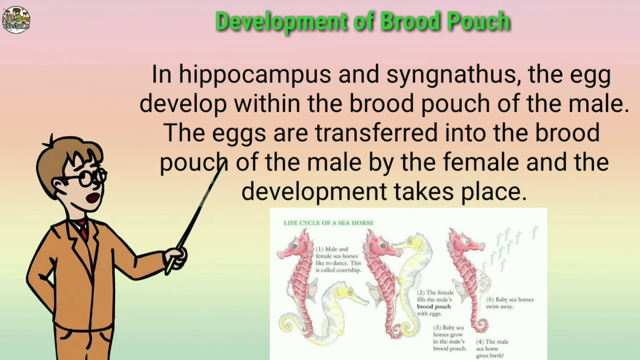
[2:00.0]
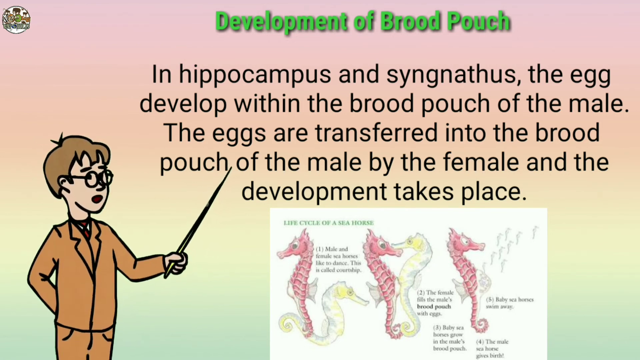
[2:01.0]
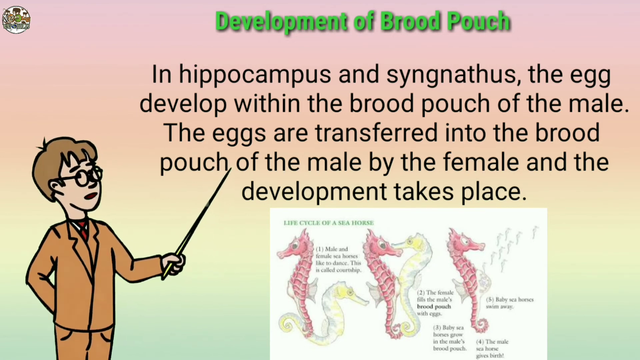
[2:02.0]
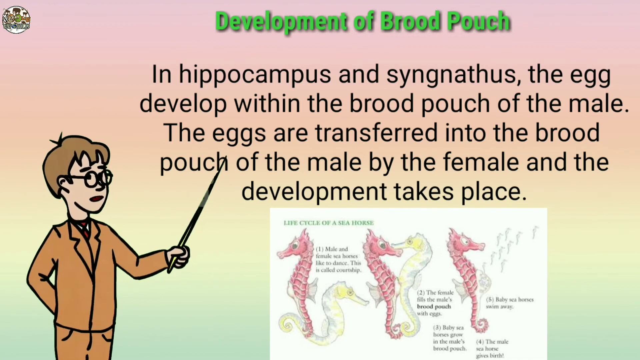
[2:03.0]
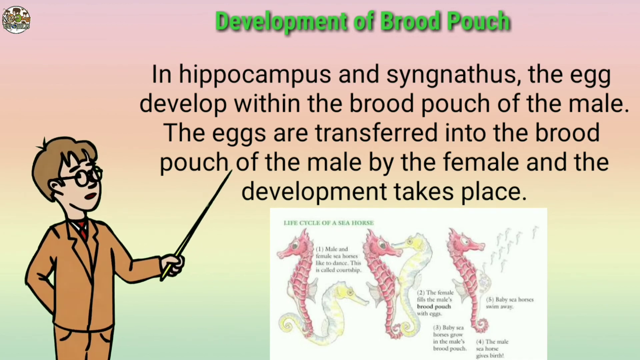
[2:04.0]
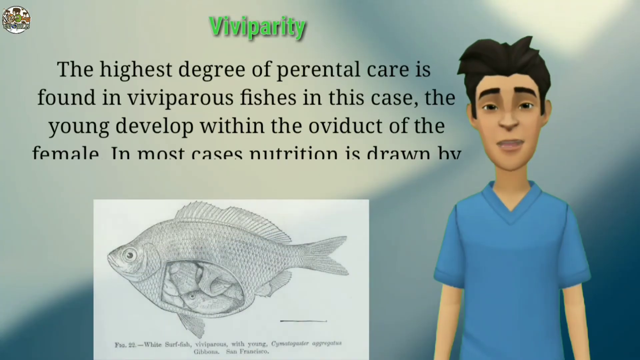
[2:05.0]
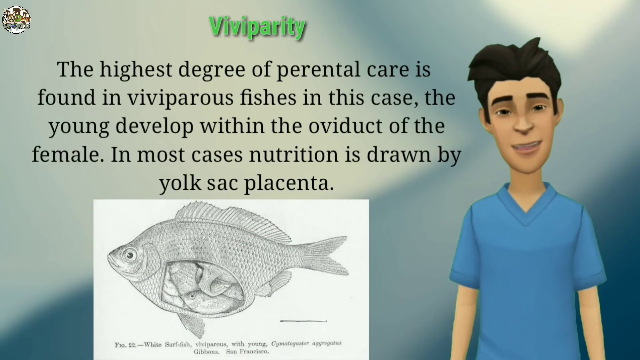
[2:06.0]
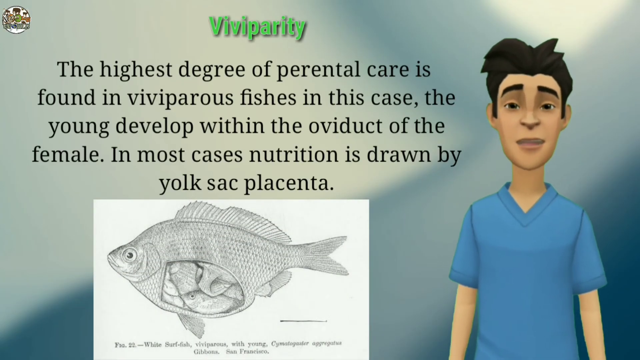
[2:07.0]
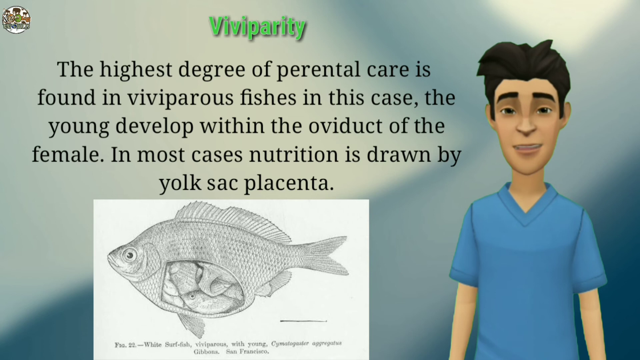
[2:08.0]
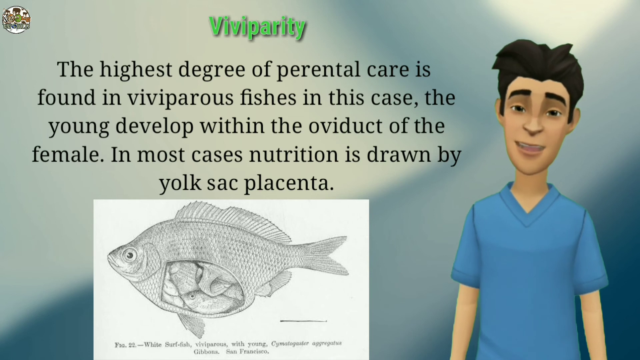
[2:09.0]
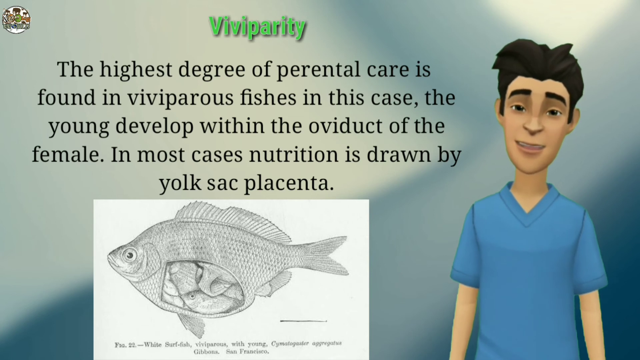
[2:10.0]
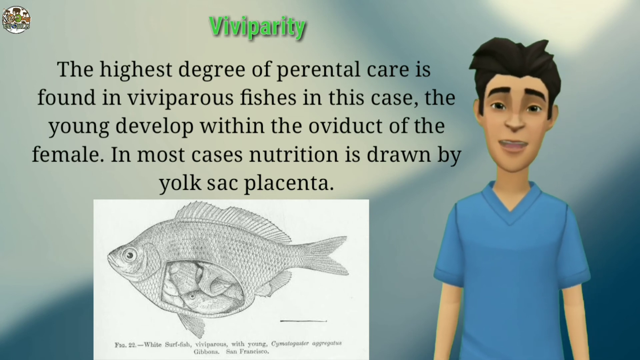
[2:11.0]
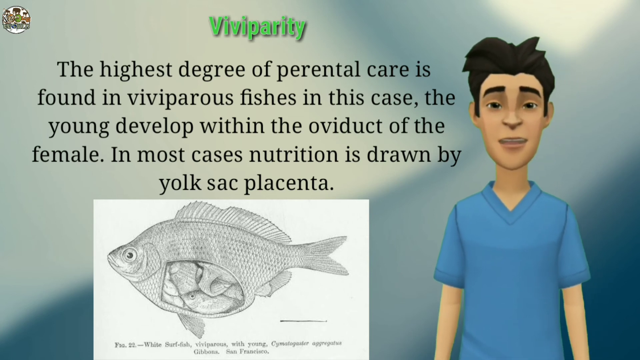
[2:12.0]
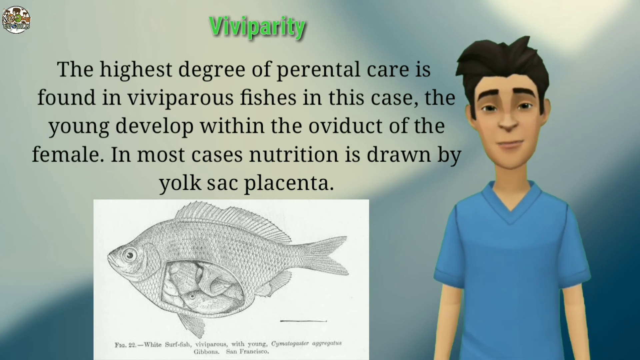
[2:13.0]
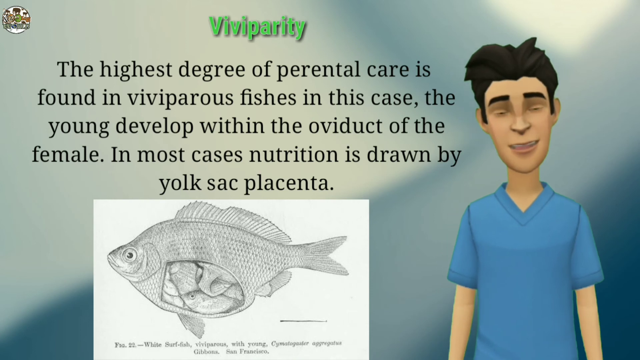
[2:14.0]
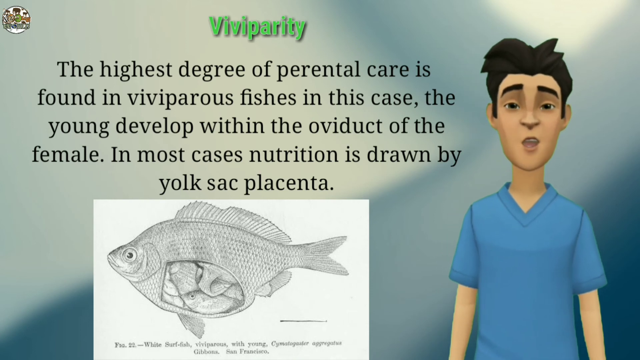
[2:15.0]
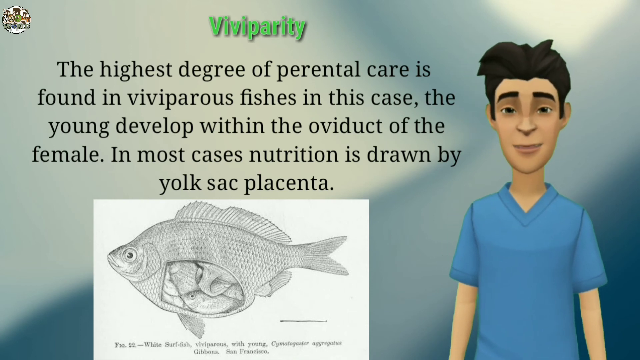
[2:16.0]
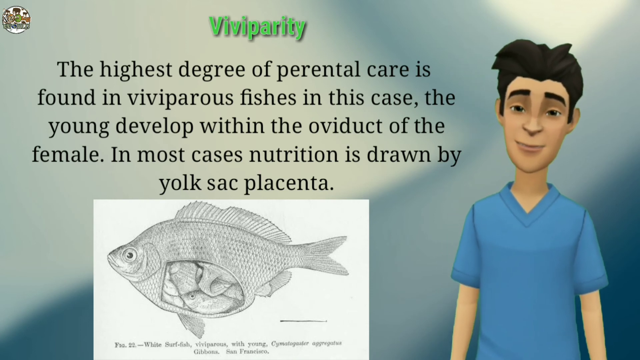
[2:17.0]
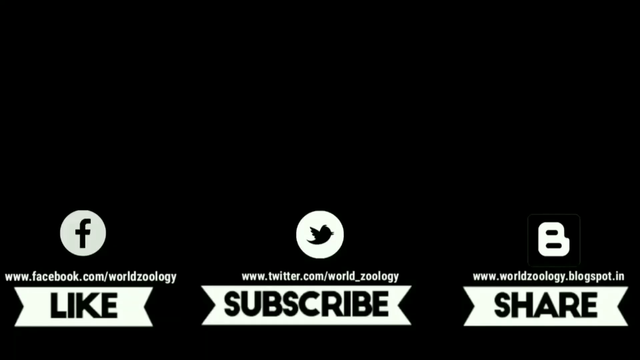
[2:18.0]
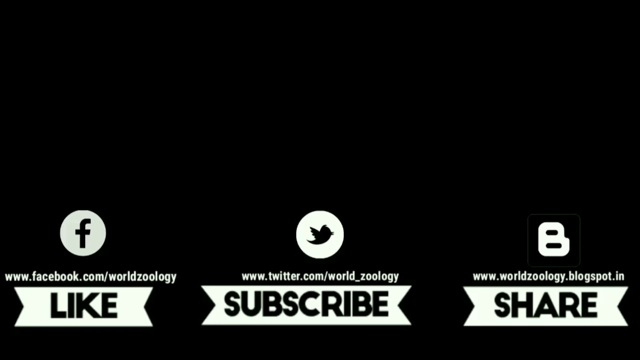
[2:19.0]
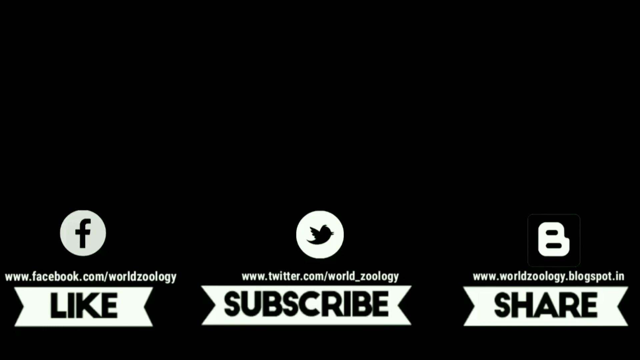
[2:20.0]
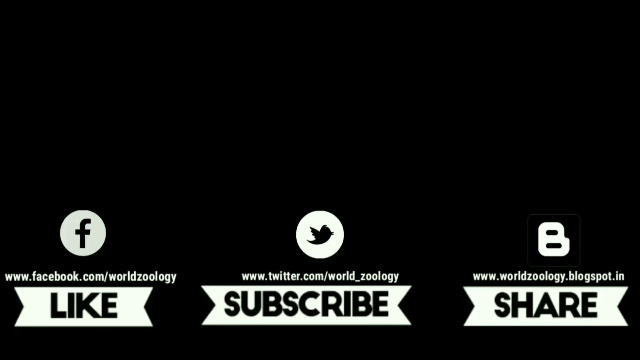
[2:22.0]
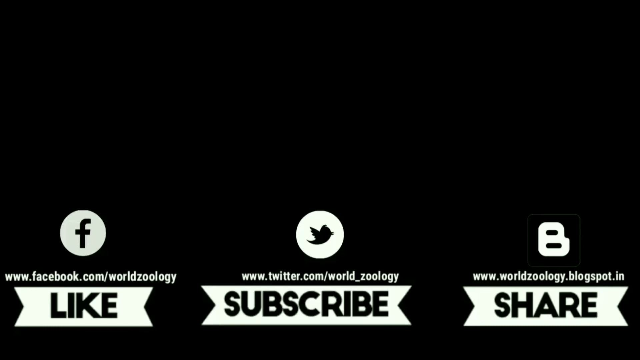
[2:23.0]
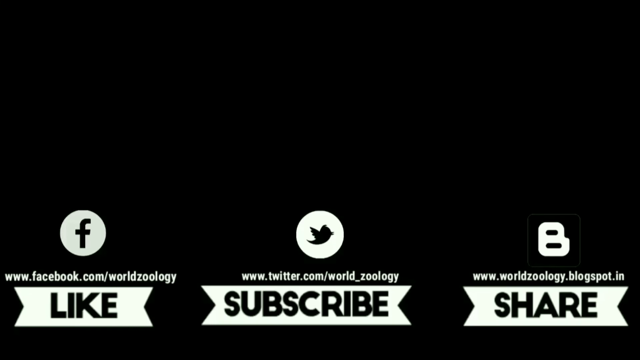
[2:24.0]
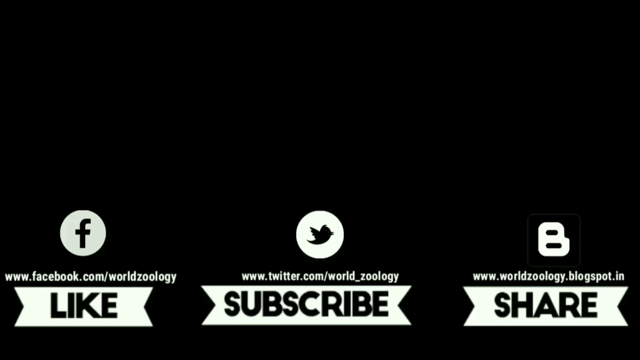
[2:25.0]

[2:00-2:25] The nerdy-looking fellow with glasses holds a wand. Below are images of what are apparently seahorses, and some facts are listed at the bottom that cannot be made out. He points at the word "hippocampus" and at text about egg development in the brood pouch, and moves the wand around a little. The topic then moves to the highest degree of parental care in fishes. A picture of a fish, a zoomed-in 3D image, is presented by the same man who was talking earlier. The last page shows like, subscribe and share buttons for Facebook, Twitter and World Zoology.